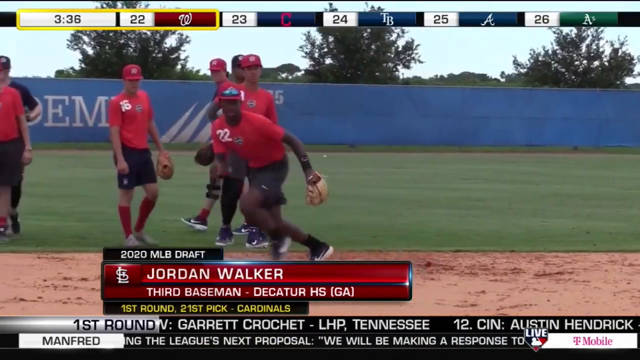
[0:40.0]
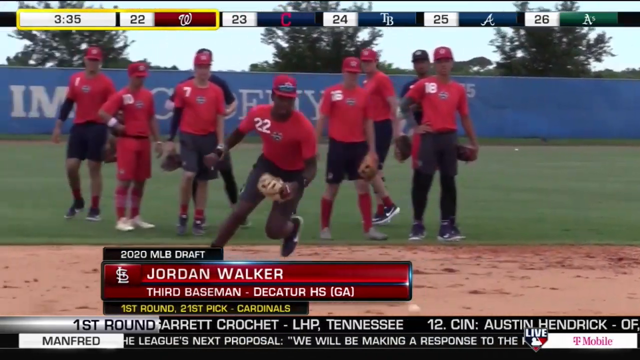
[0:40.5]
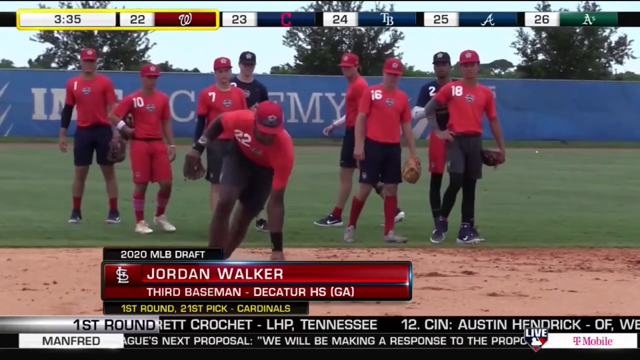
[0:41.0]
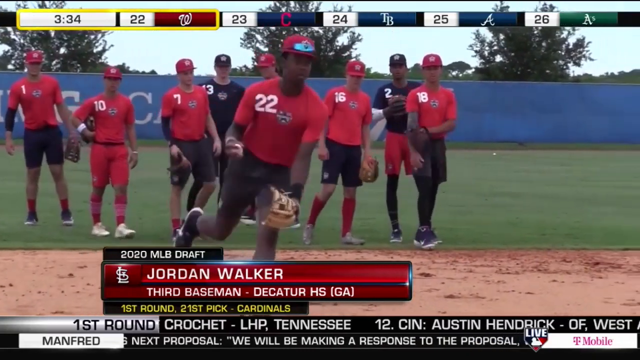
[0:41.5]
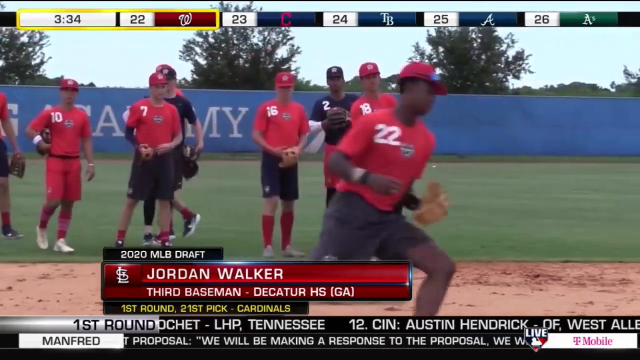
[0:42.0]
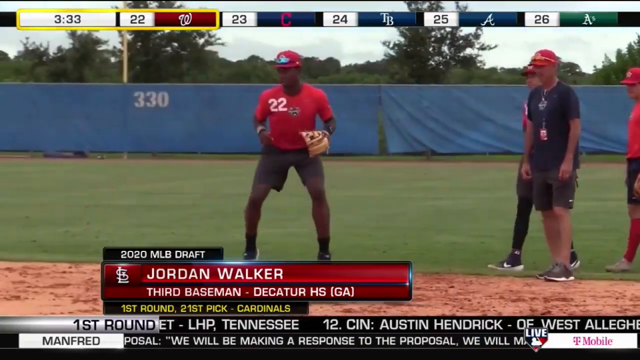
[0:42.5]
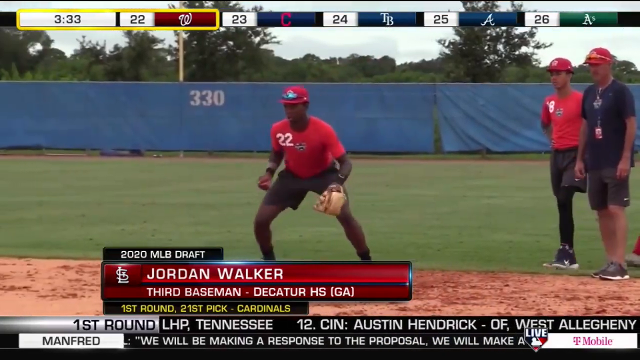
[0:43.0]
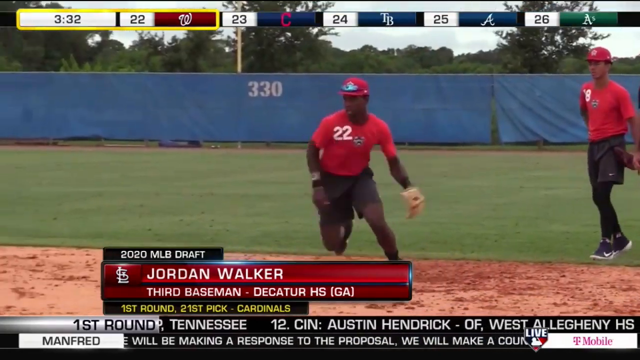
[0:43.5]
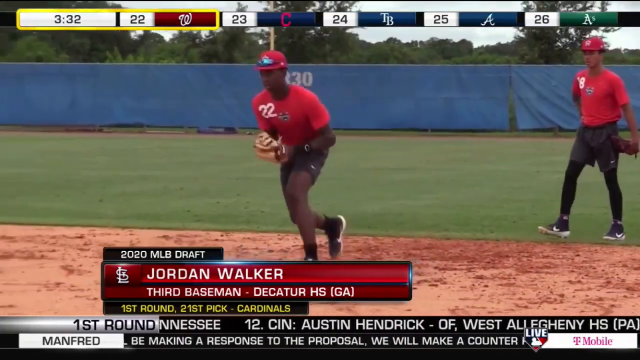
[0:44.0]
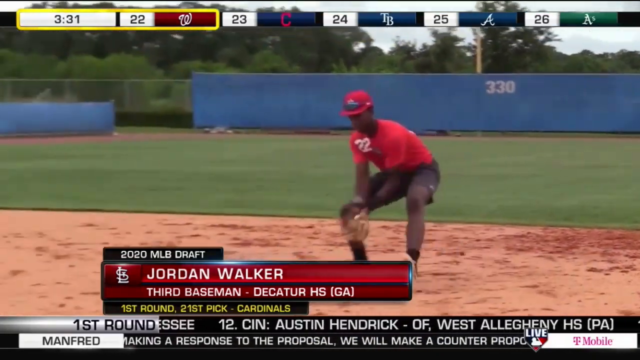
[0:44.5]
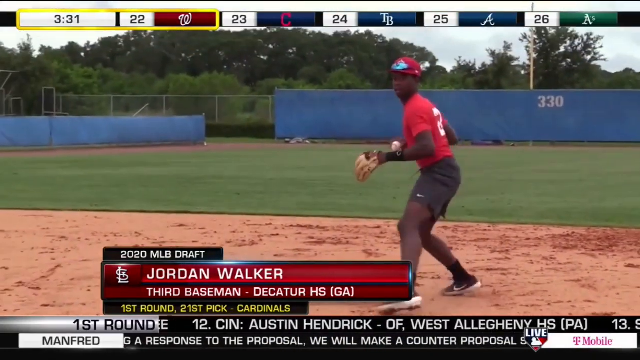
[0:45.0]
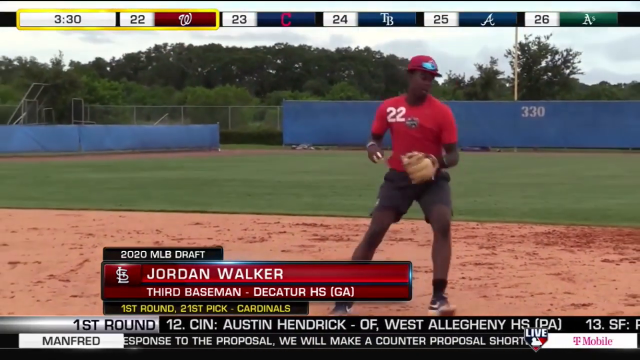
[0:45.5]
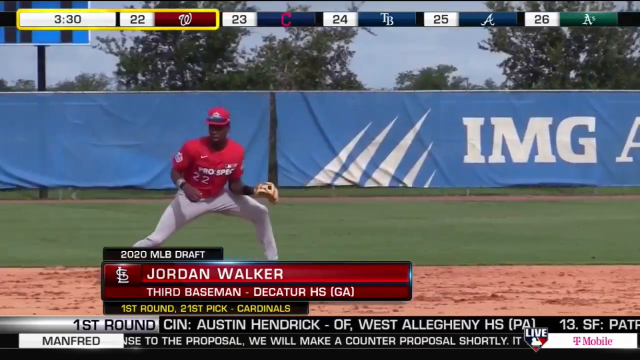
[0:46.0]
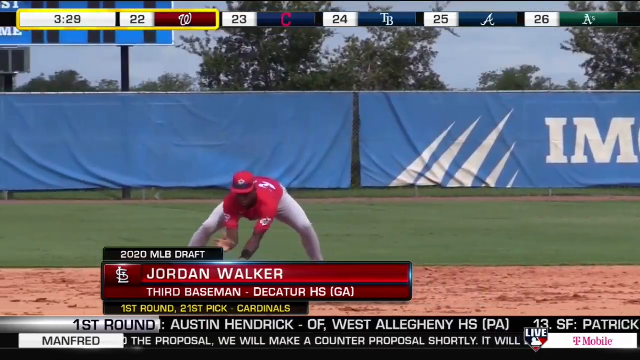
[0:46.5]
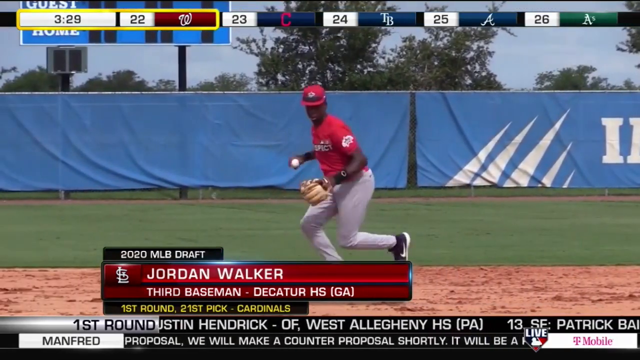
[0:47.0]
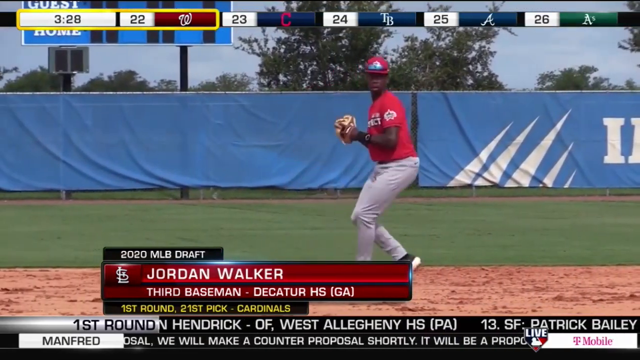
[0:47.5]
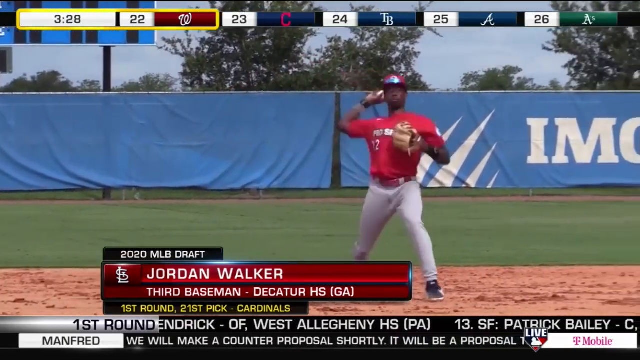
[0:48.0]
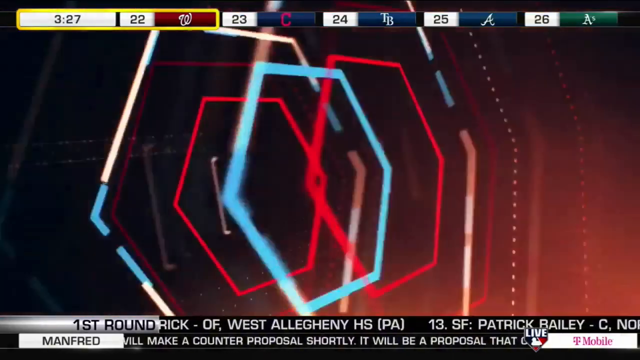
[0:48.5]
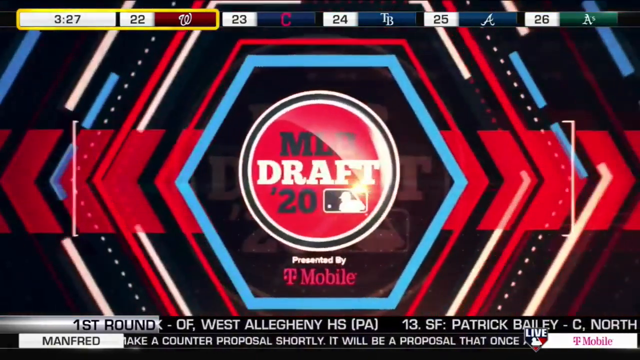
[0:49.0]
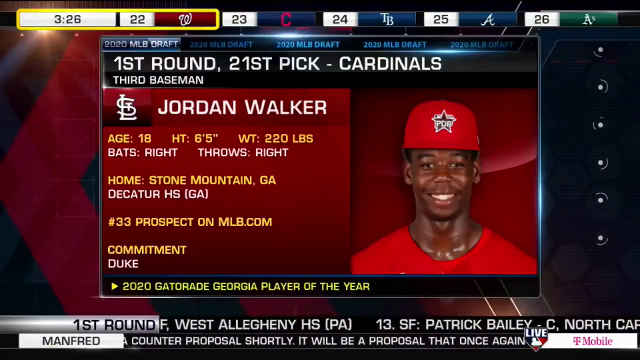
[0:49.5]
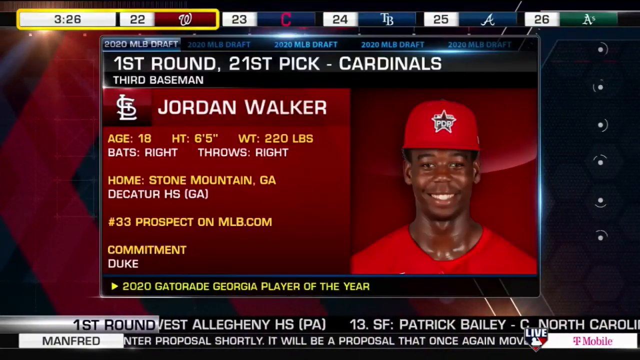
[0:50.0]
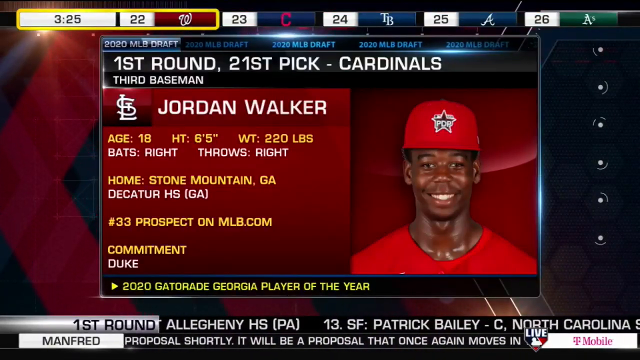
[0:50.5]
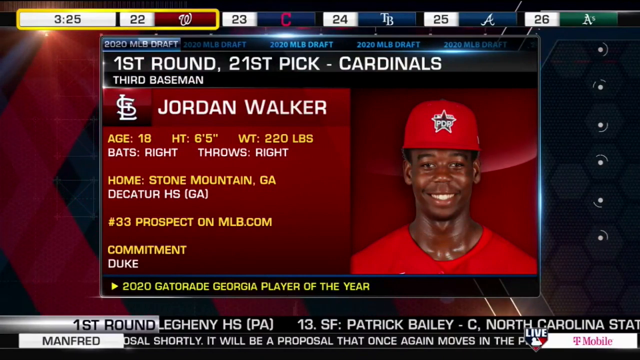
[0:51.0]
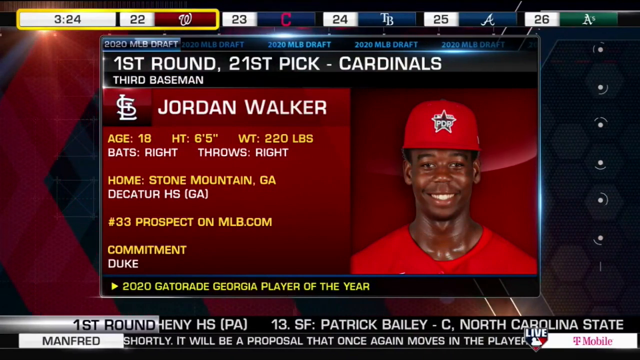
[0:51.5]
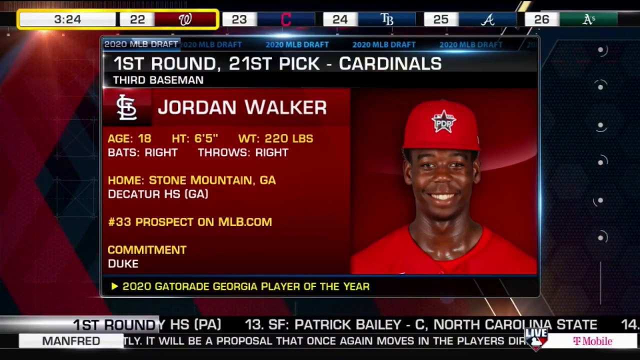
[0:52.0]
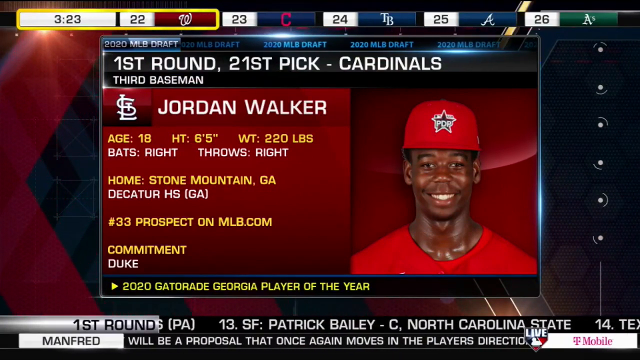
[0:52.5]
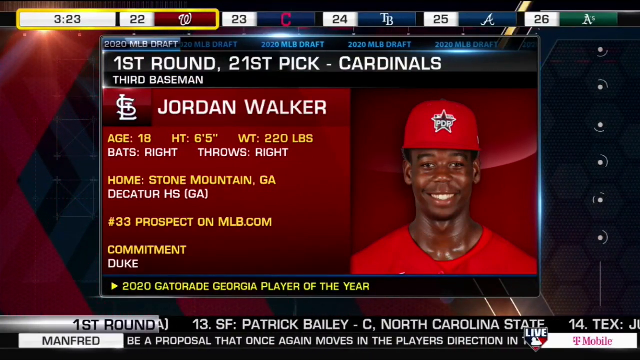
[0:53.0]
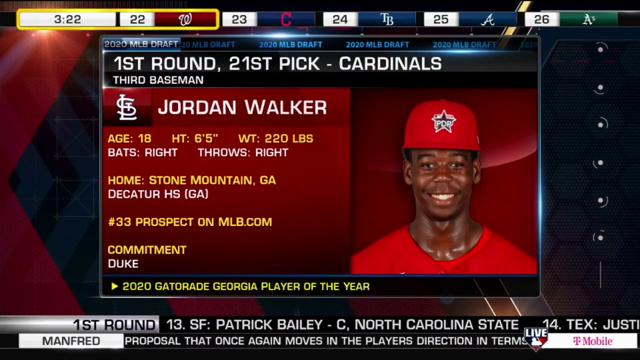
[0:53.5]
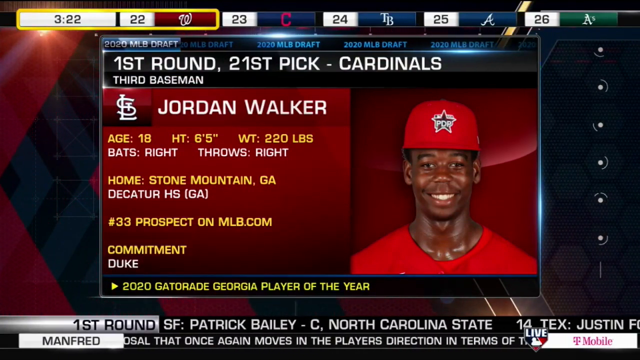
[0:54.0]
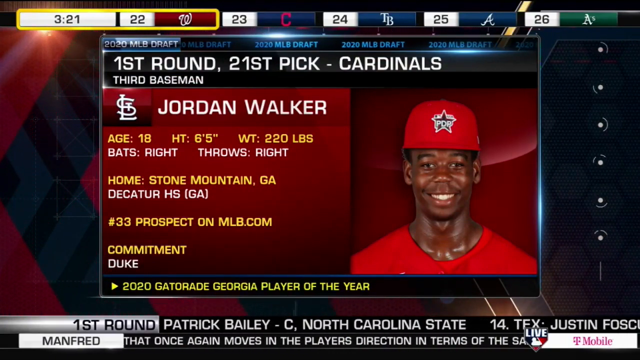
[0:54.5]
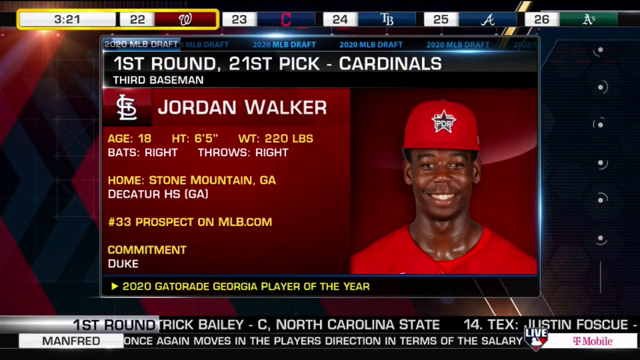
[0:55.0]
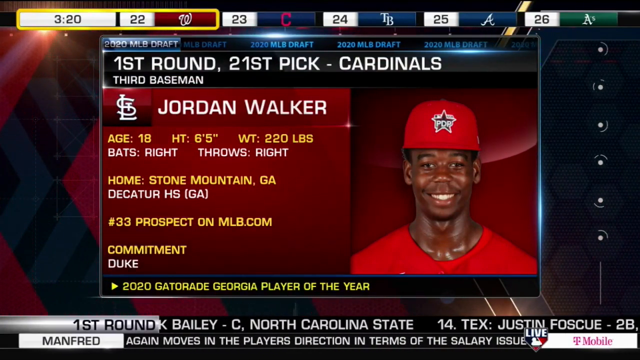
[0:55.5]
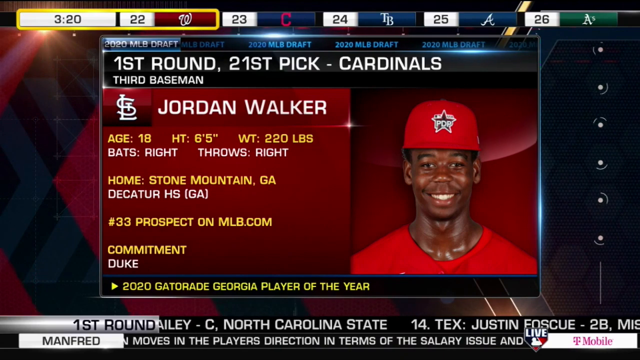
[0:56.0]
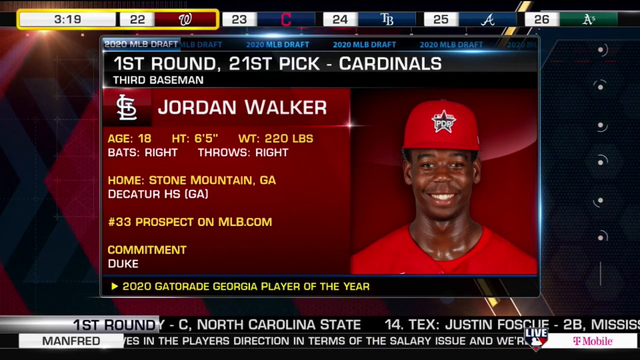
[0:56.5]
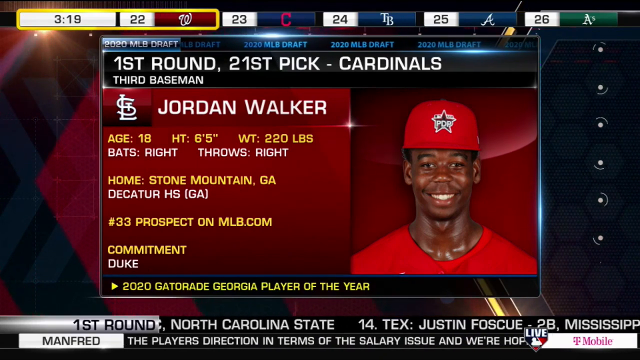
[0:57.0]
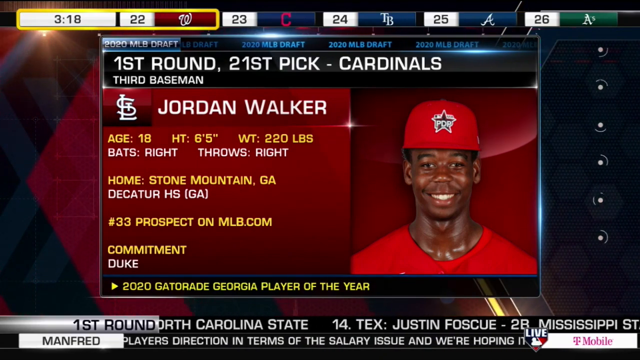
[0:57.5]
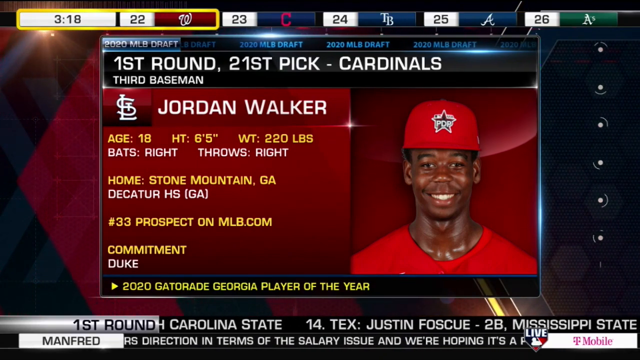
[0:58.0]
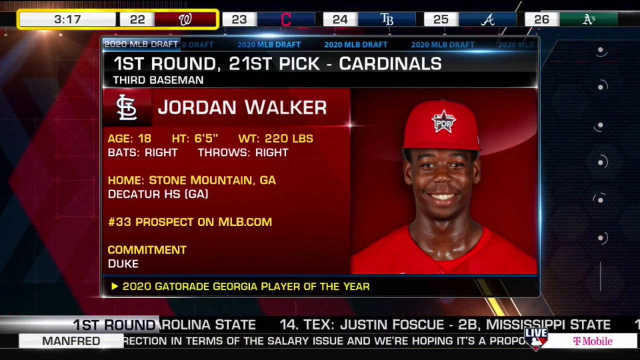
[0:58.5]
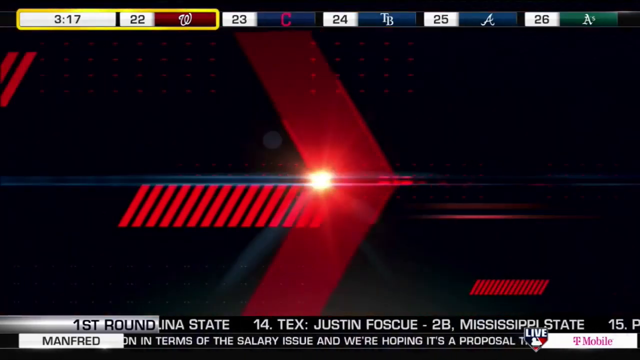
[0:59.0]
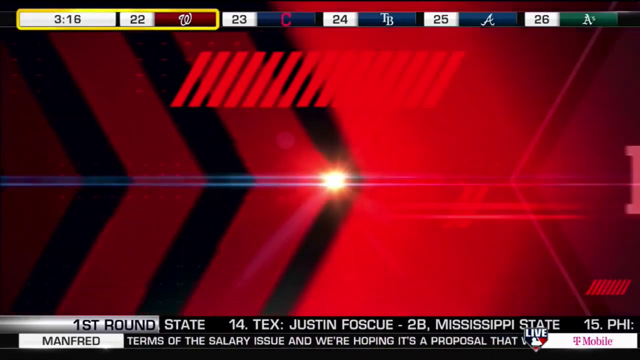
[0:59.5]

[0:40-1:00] A group of young players is on an infield; most wear red t-shirts, red hats and black shorts, but two wear blue shirts and hats. Jordan Walker is in the forefront taking ground ball practice. He runs, scoops up the ball with the mitt on his left hand, takes a few jogging steps toward the camera, and turns away to return to his place in line. In another shot, he hops to his right, sidesteps to the right twice, runs forward, fields the ball, aims as if to throw to first, but instead turns and returns to the back of the fielding line. Next he is in a game uniform with a red jersey and long gray pants; he fields a hopping ground ball, steps toward first and makes the throw. A spinning transition reads "MLB Draft," followed by a graphic that looks like a baseball card of Jordan Walker in a red hat and red jersey. It reads "first round, 21st pick, Cardinals, third baseman, age 18, height 6'5", weight 220, Decatur High School, Georgia. Number 33 prospect on MLB.com."